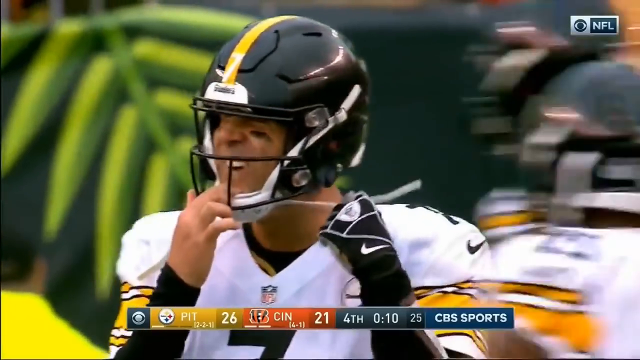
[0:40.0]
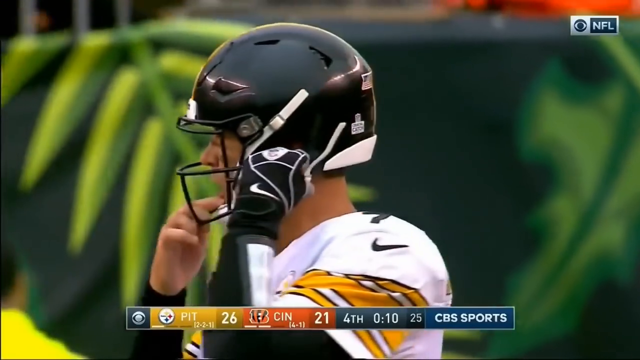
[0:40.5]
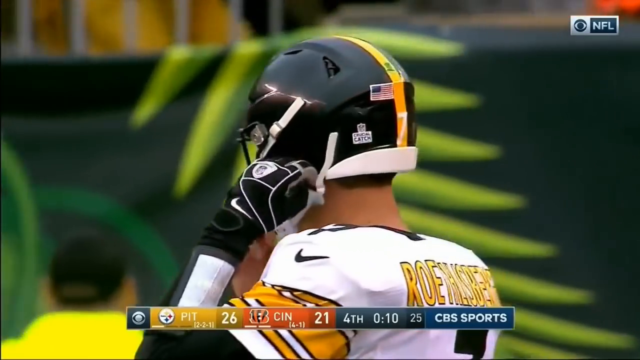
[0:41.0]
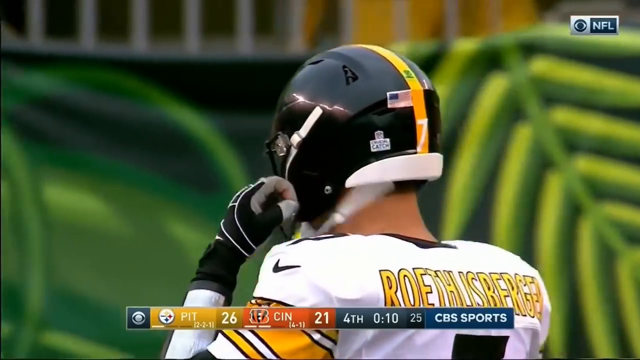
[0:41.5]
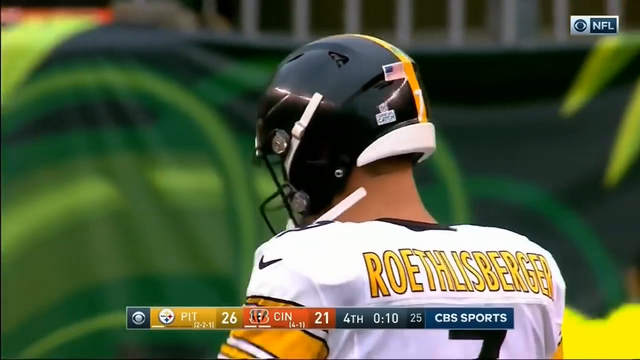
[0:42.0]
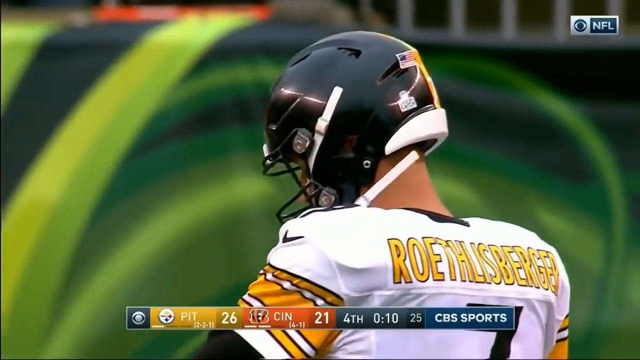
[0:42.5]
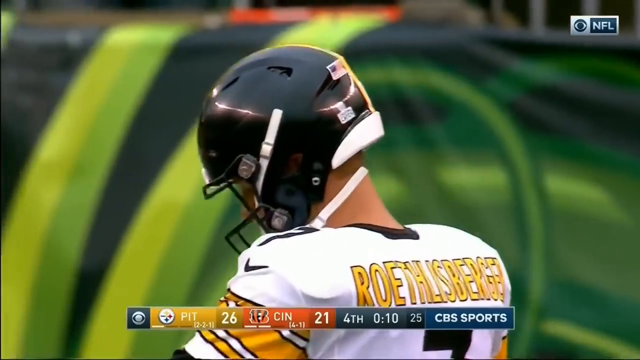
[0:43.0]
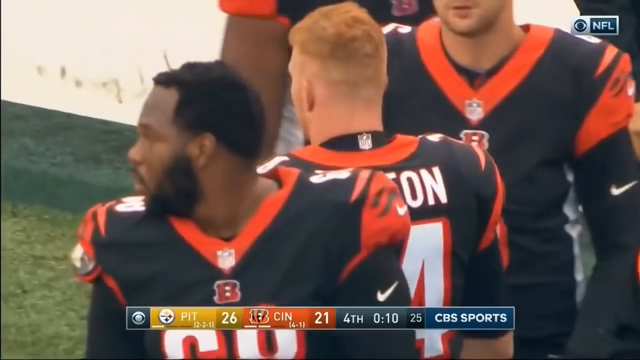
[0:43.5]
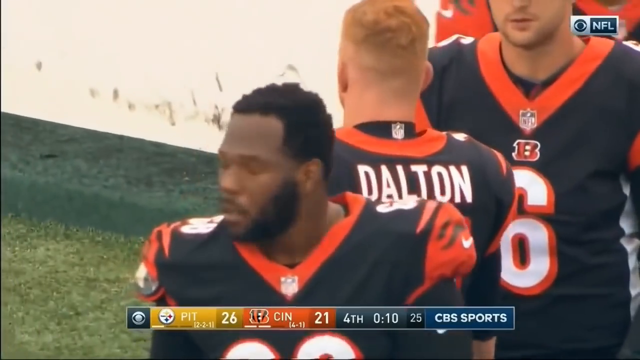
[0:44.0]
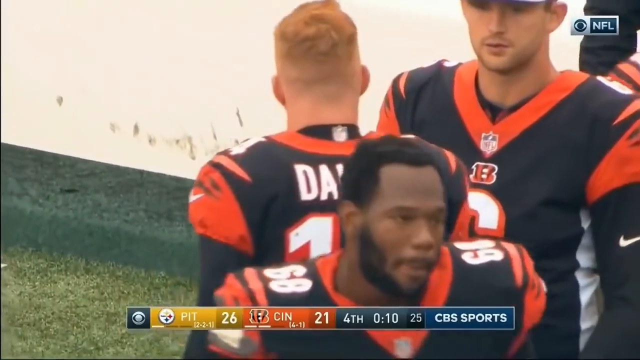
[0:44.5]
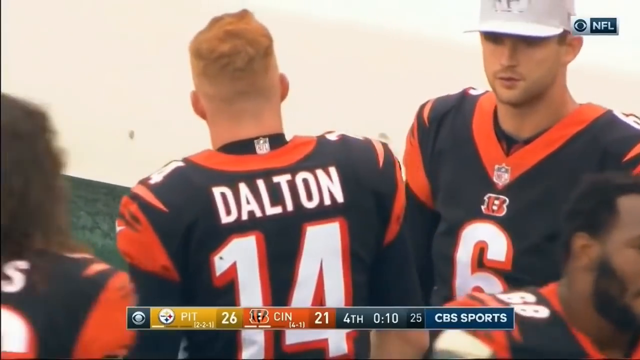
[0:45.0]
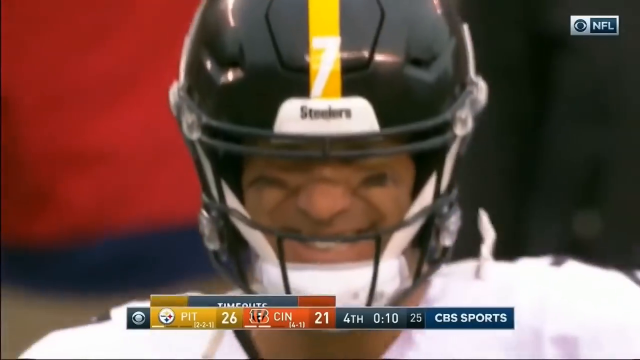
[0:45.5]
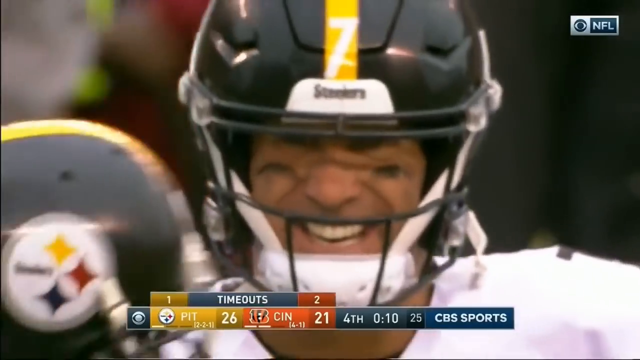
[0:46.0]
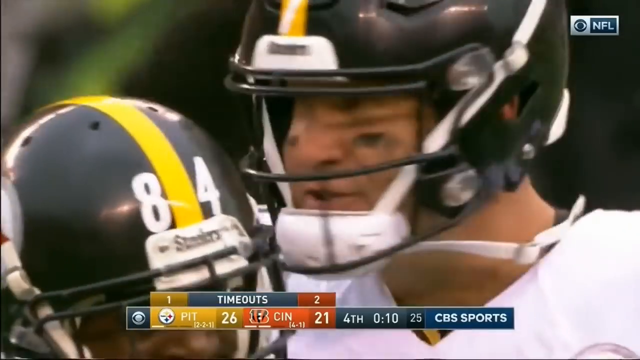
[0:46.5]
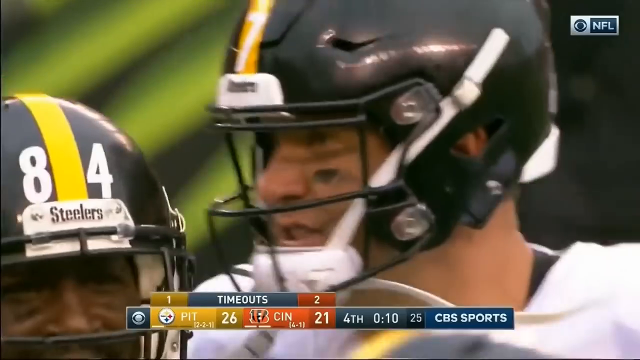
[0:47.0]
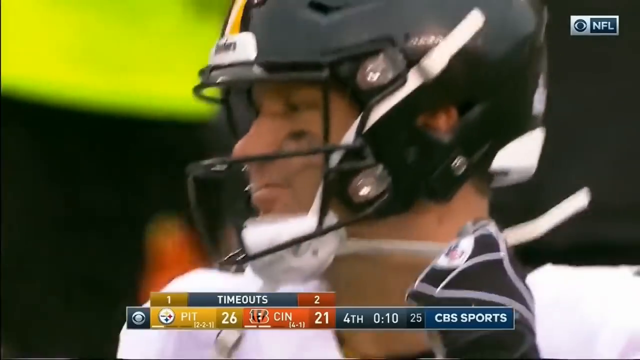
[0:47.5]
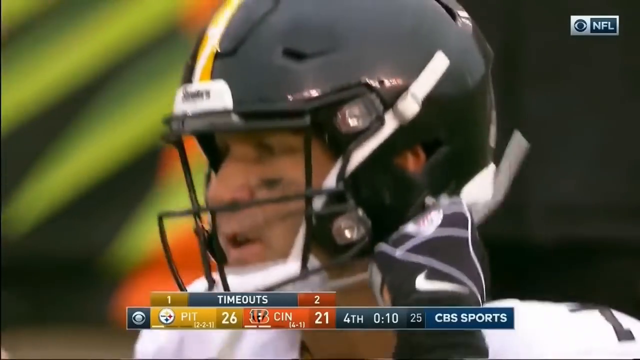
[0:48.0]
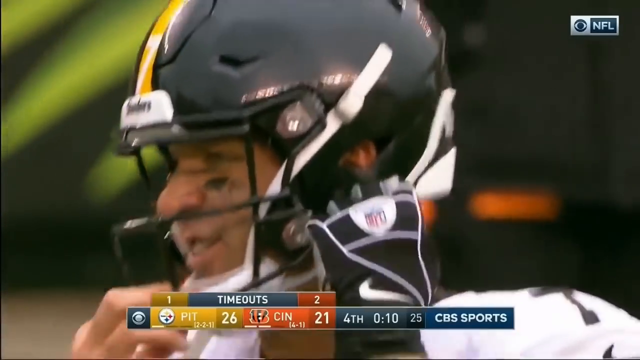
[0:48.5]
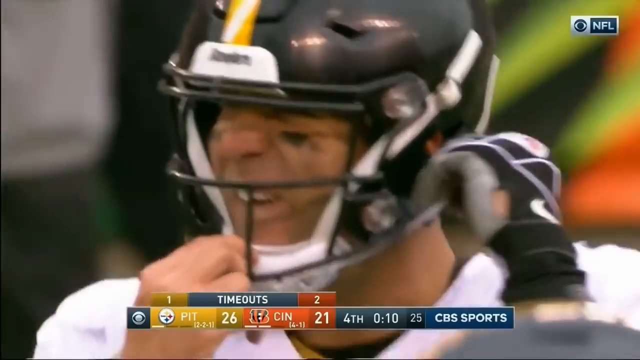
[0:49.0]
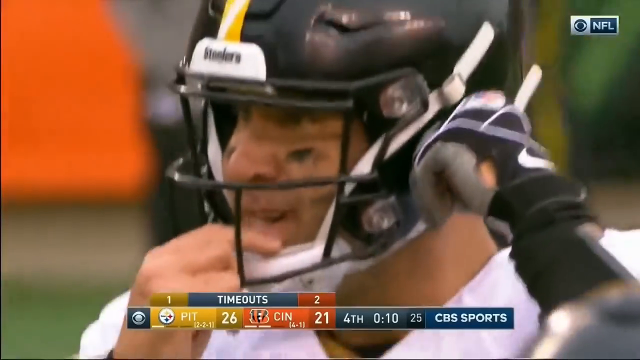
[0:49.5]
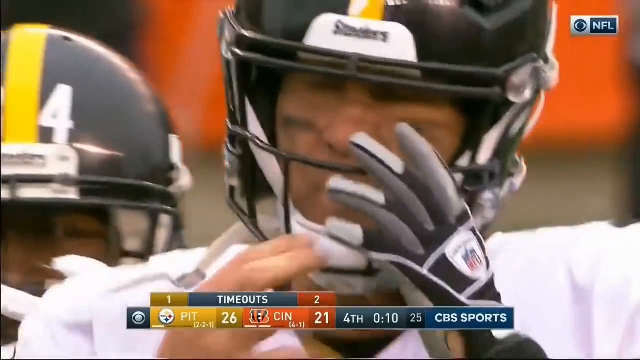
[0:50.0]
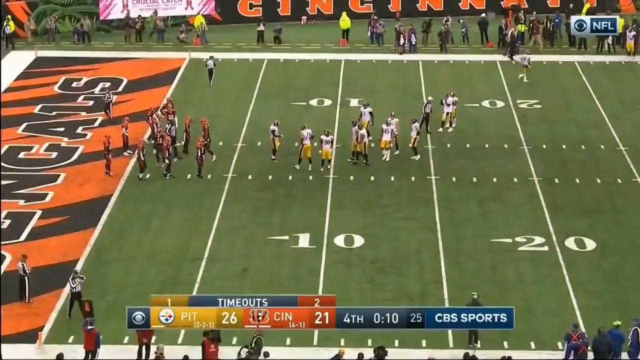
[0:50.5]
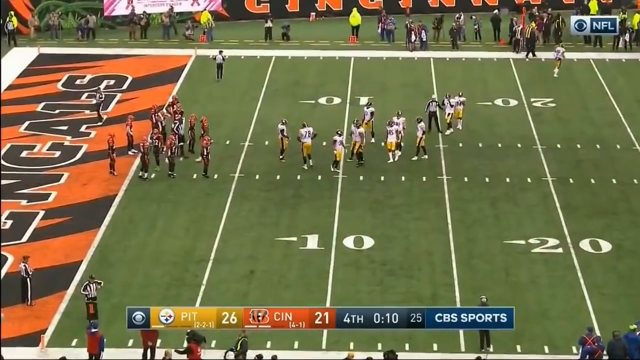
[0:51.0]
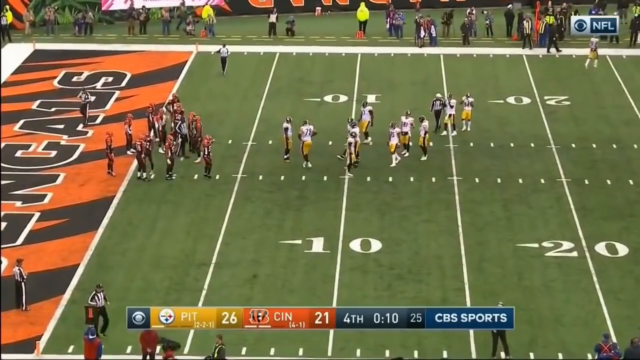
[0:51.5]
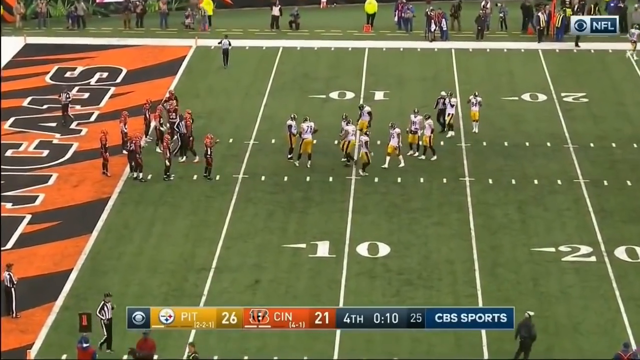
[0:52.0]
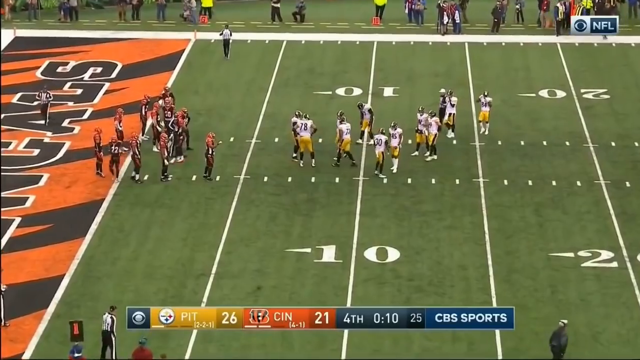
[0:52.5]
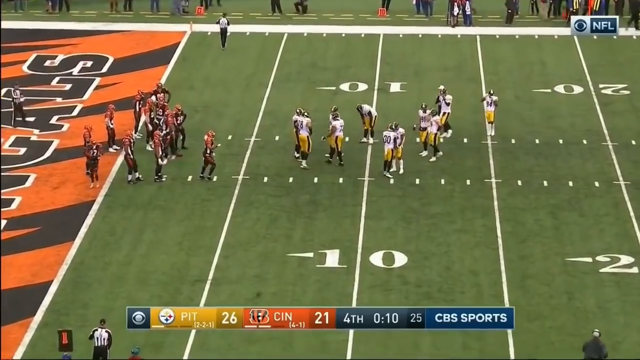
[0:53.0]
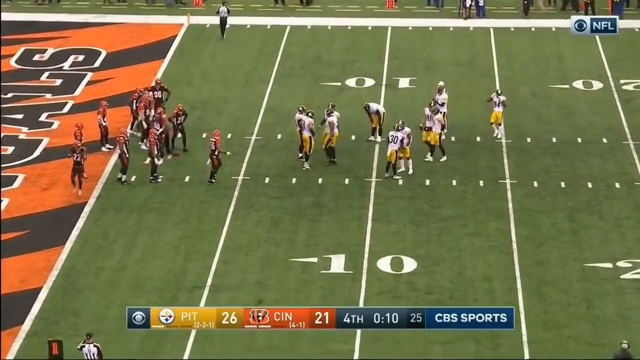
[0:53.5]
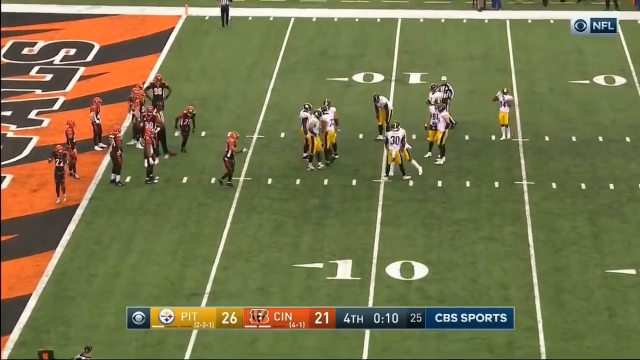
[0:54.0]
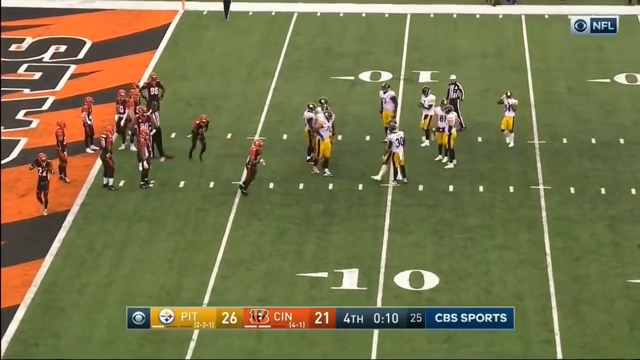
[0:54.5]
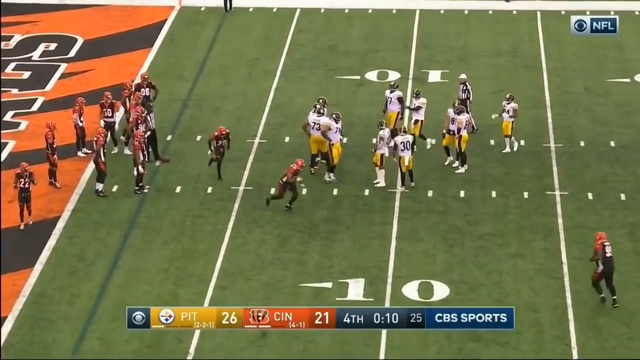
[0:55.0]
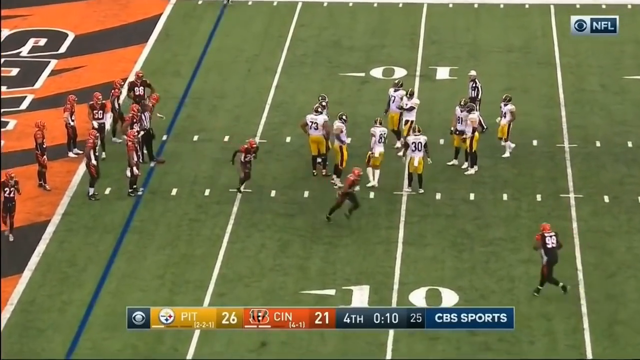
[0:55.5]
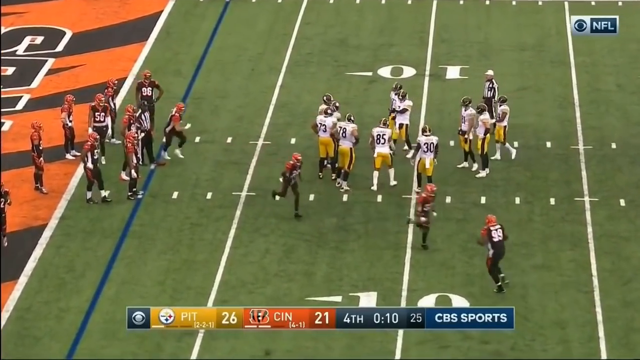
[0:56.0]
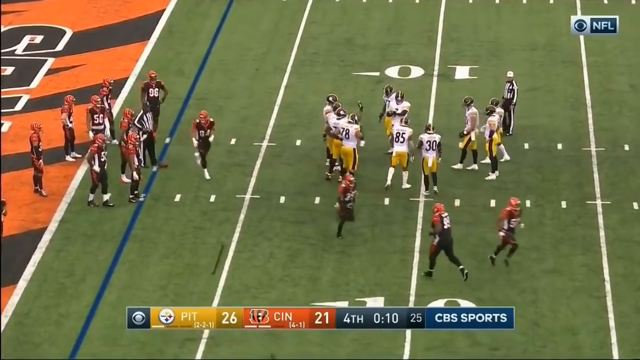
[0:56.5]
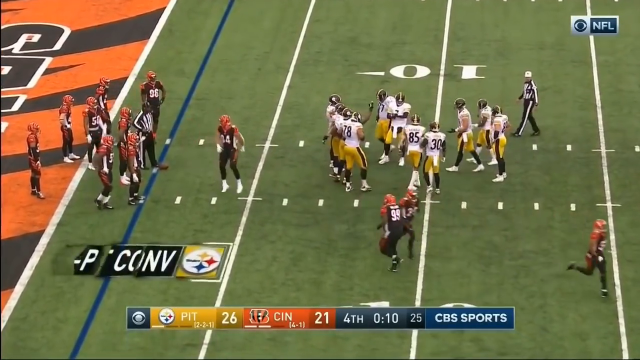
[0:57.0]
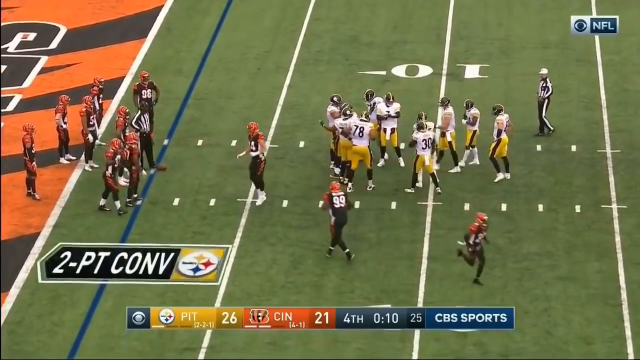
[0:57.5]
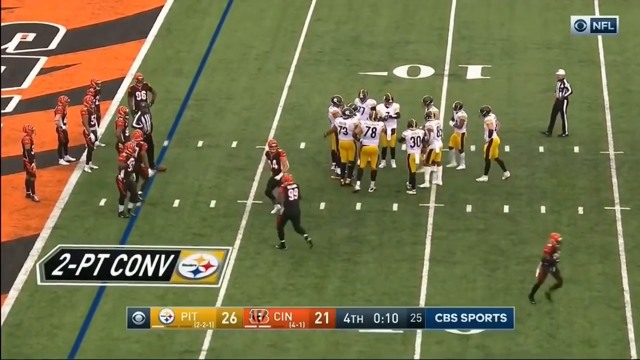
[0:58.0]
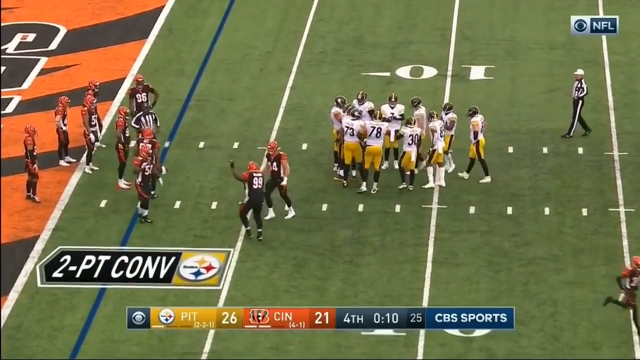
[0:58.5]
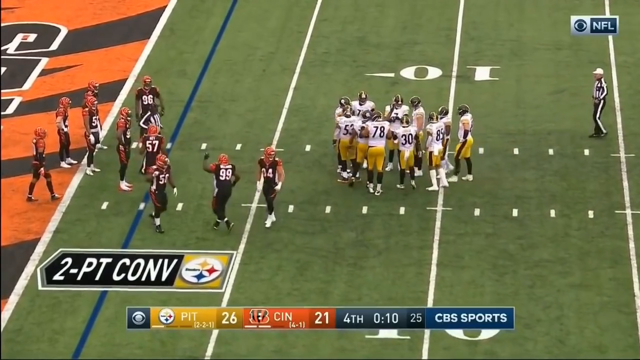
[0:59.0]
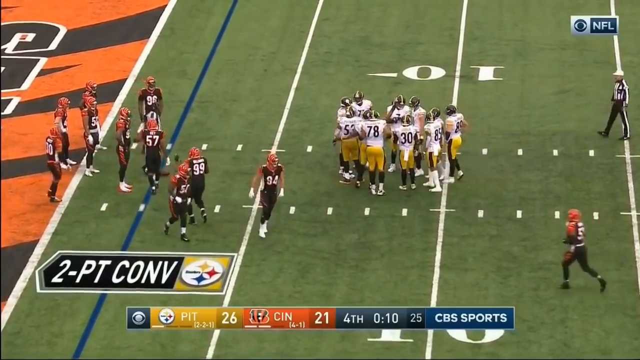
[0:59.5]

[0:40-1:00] A close-up shows a football player who appears to be standing on the sideline, adjusting his helmet. He wears a black helmet with a black face guard, a white jersey with a black Nike logo on the left shoulder, and black and white gloves with a white Nike logo on the back. He seems to be undoing the chin strap of his helmet. His name is on the back of his jersey in yellow letters with a black outline. The view moves to the Bengals sideline, where players stand around in jerseys and pads without helmets, and a player with the name Dalton and the number 14 on the back of his jersey walks by. A close-up then shows a man wearing a helmet who appears to go up to number 84 and congratulate him. The helmet shows this team is the Pittsburgh Steelers, with the Steelers logo on the side of their helmets.